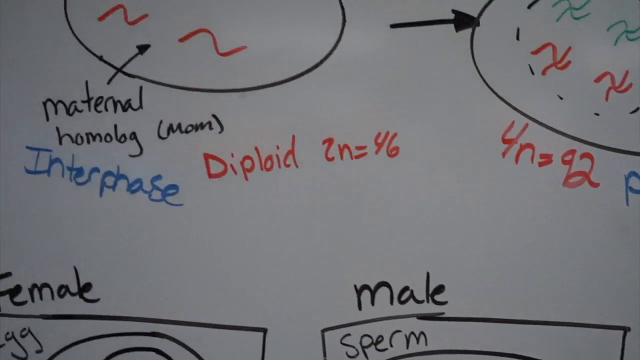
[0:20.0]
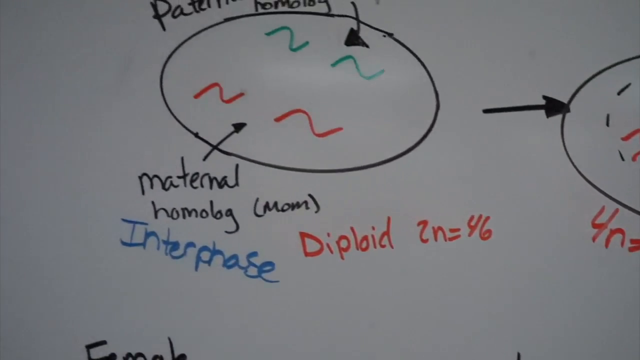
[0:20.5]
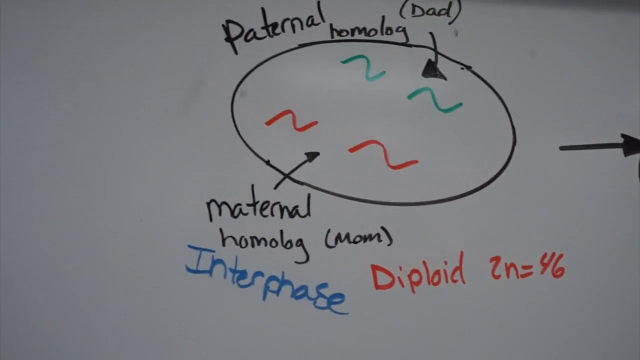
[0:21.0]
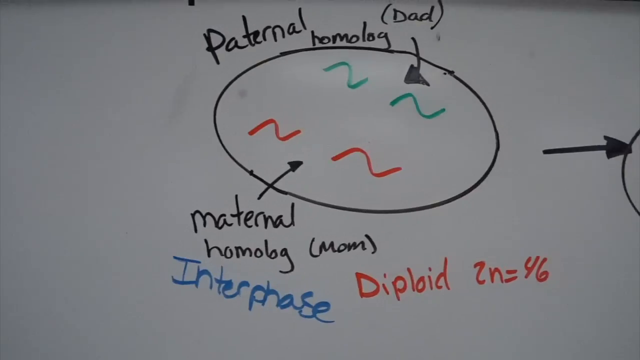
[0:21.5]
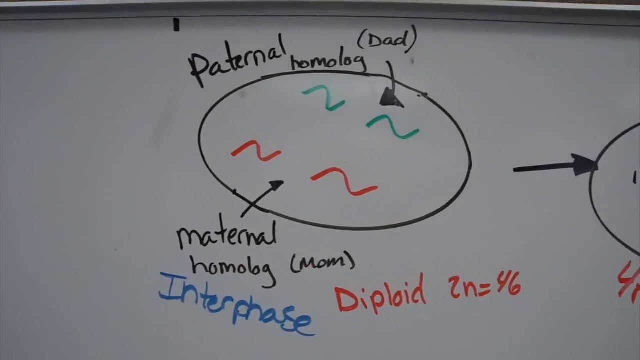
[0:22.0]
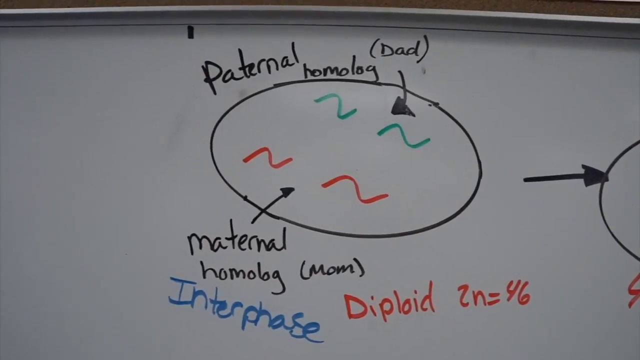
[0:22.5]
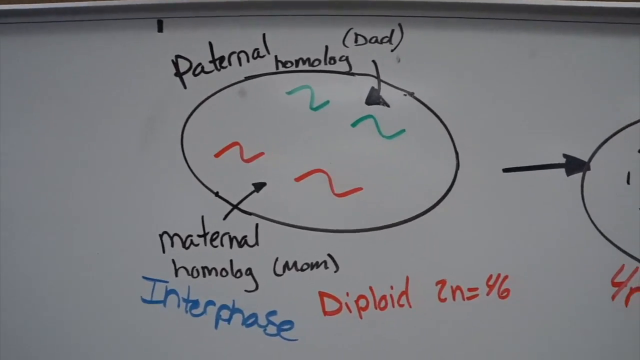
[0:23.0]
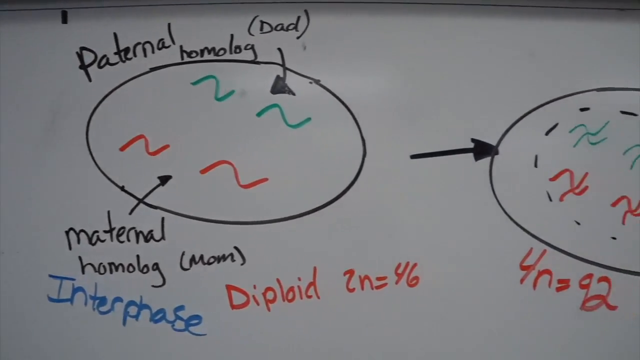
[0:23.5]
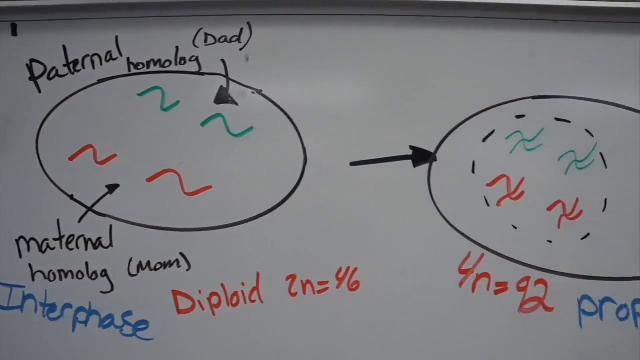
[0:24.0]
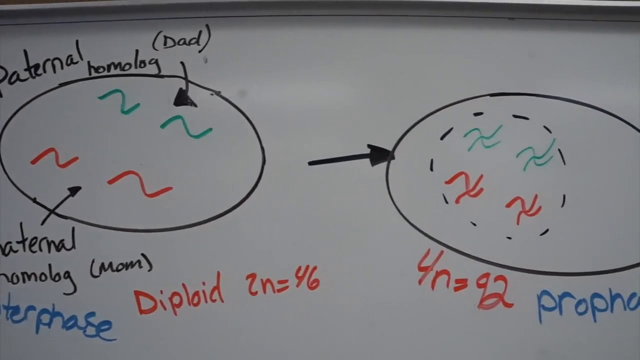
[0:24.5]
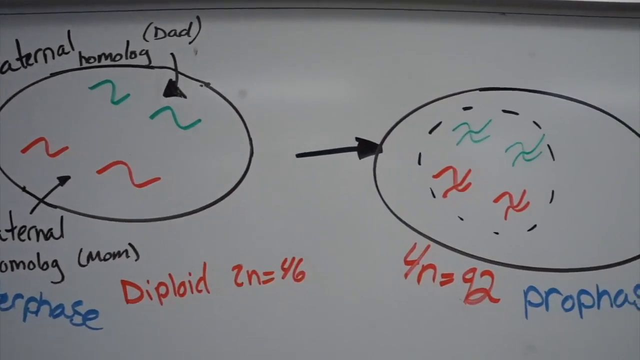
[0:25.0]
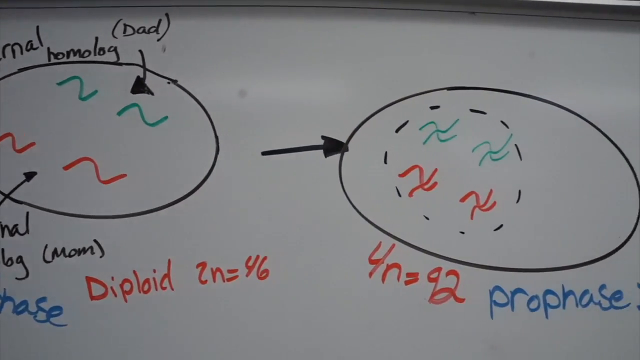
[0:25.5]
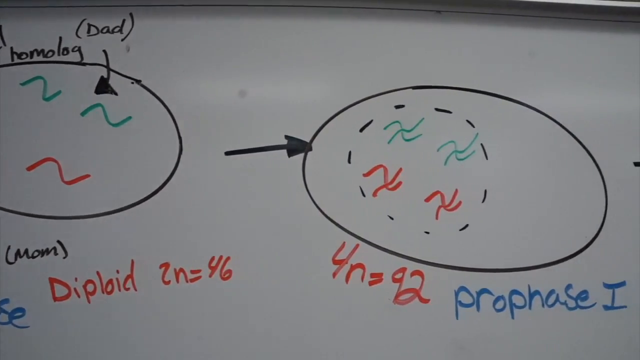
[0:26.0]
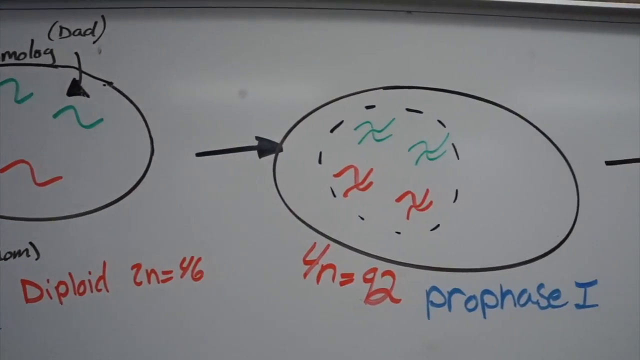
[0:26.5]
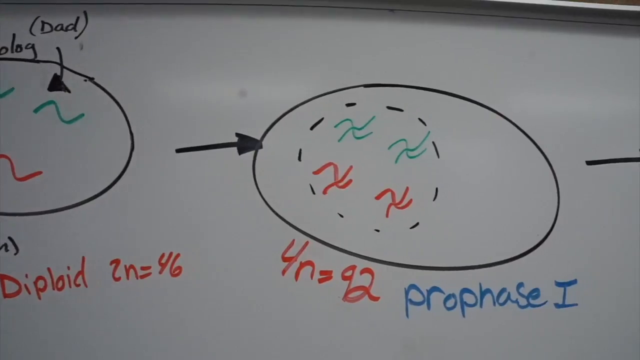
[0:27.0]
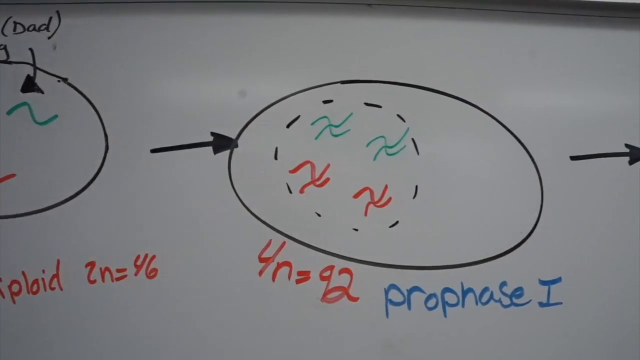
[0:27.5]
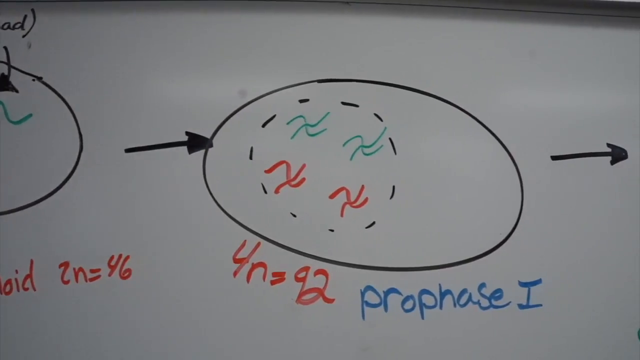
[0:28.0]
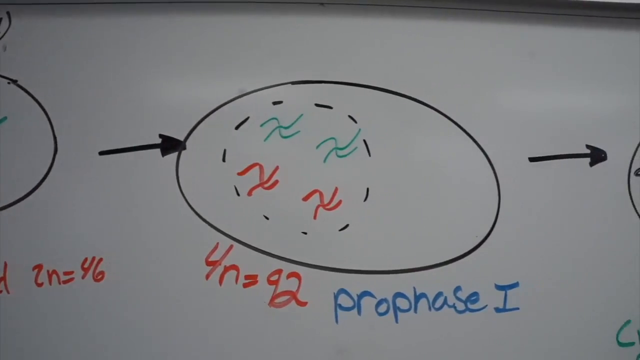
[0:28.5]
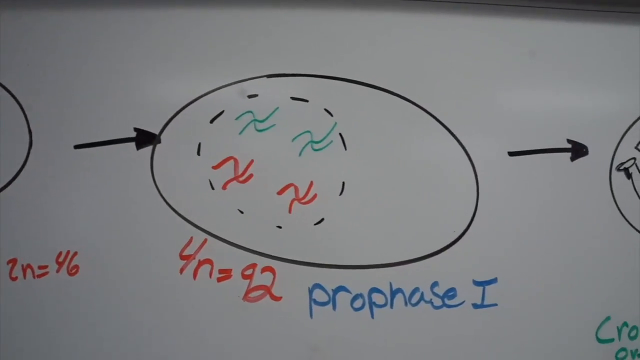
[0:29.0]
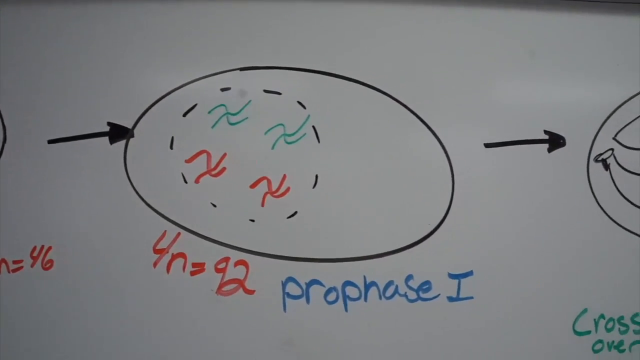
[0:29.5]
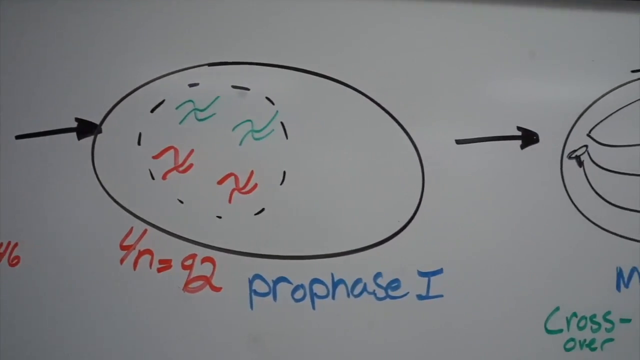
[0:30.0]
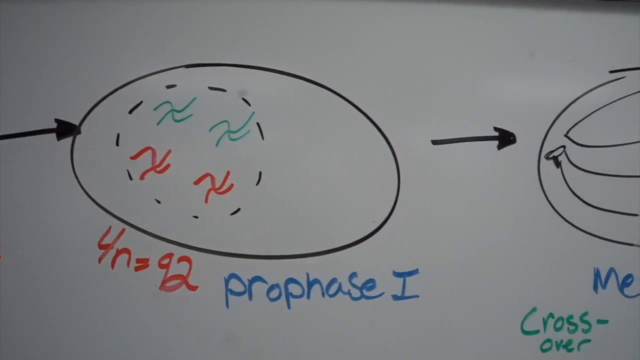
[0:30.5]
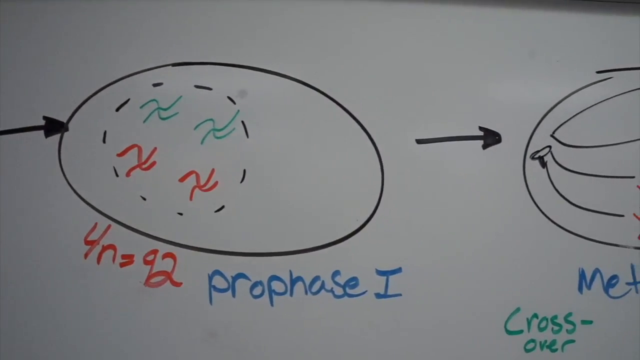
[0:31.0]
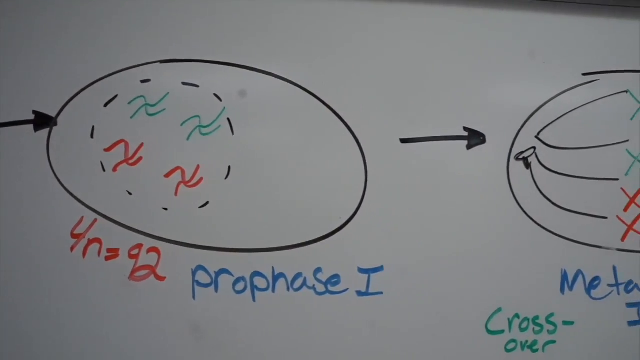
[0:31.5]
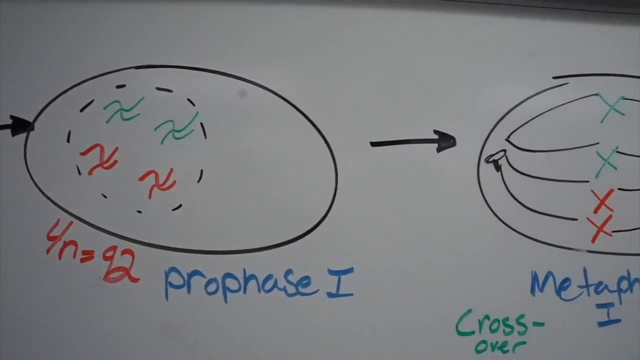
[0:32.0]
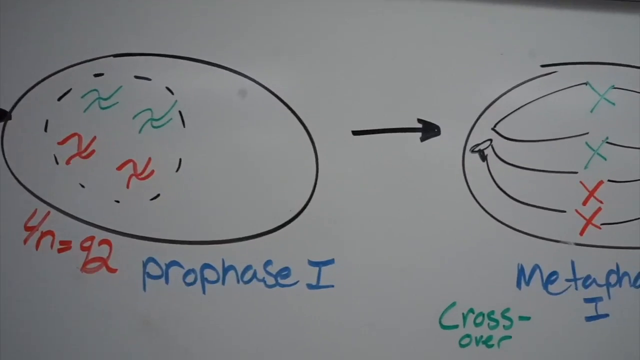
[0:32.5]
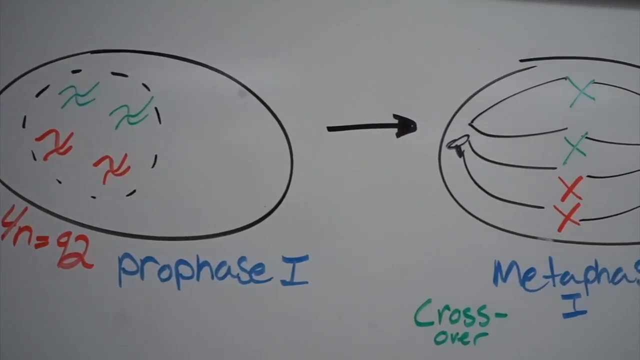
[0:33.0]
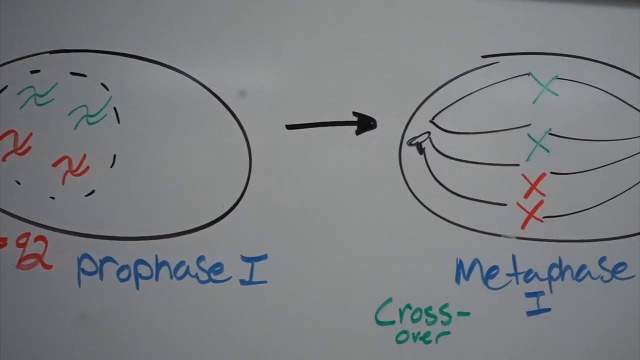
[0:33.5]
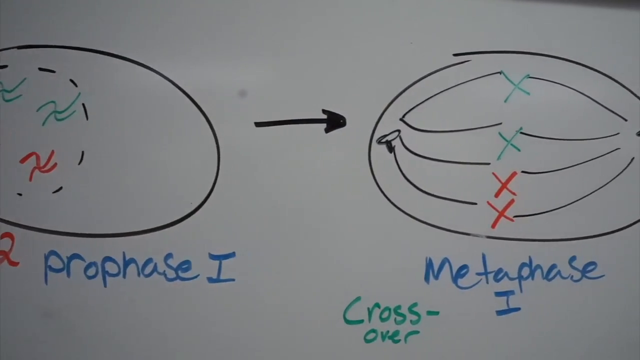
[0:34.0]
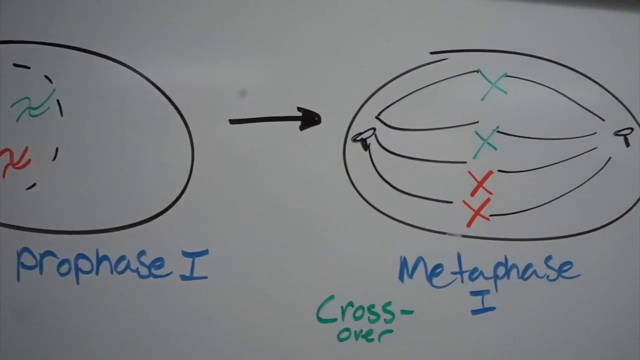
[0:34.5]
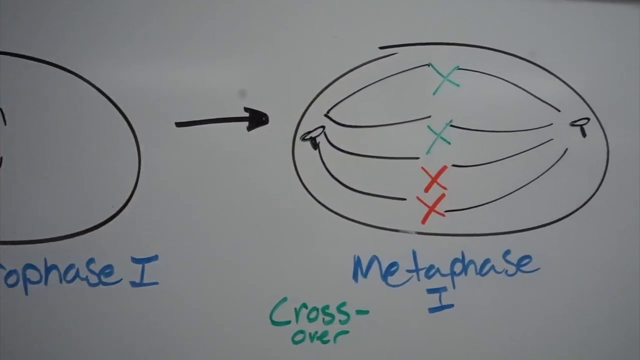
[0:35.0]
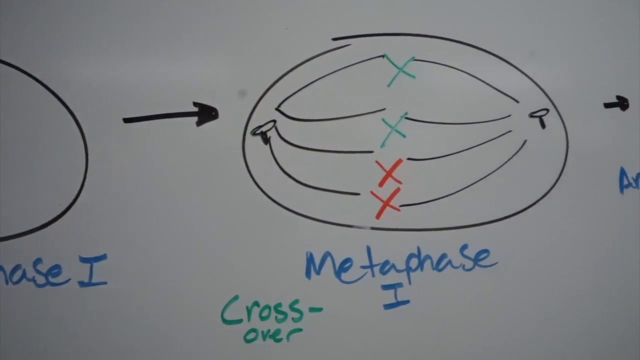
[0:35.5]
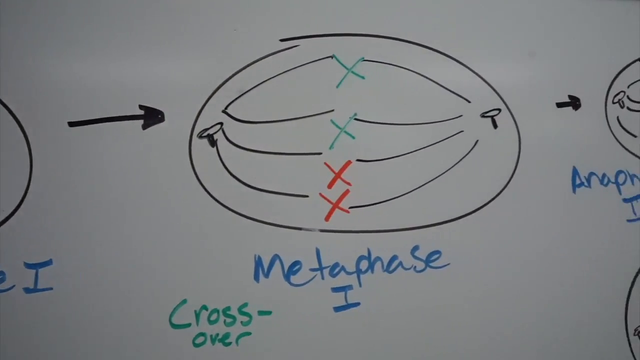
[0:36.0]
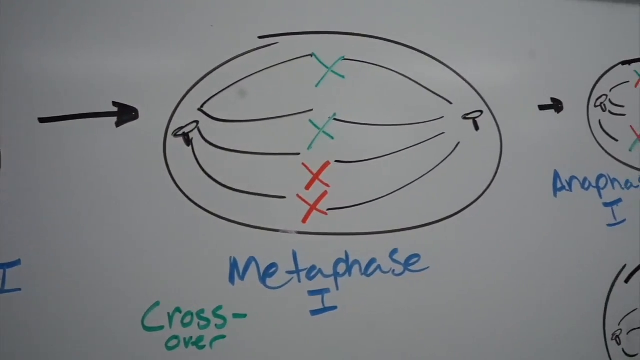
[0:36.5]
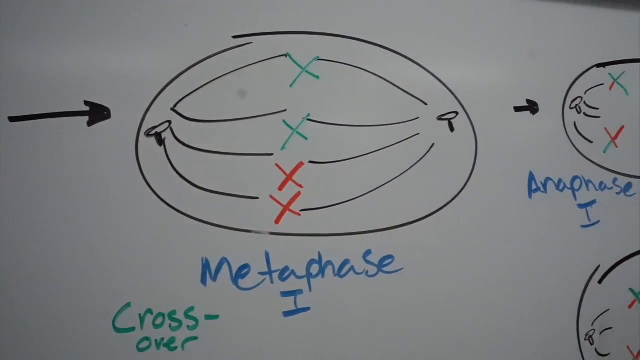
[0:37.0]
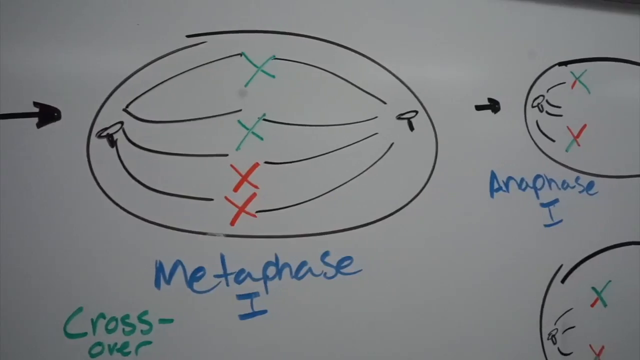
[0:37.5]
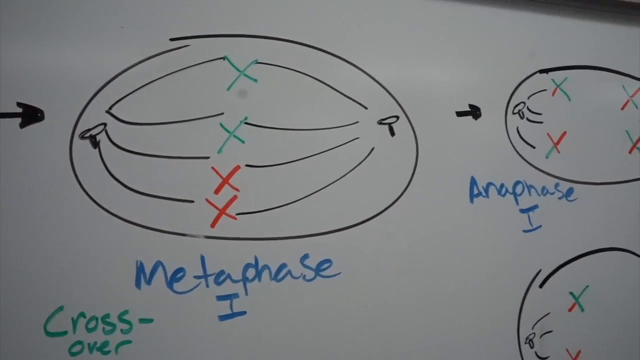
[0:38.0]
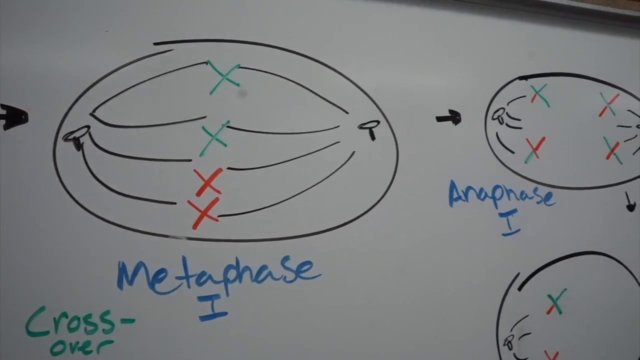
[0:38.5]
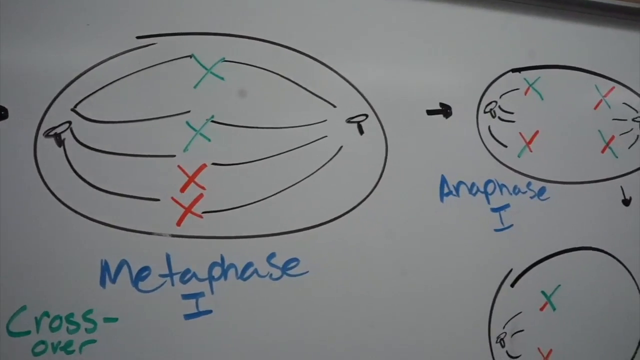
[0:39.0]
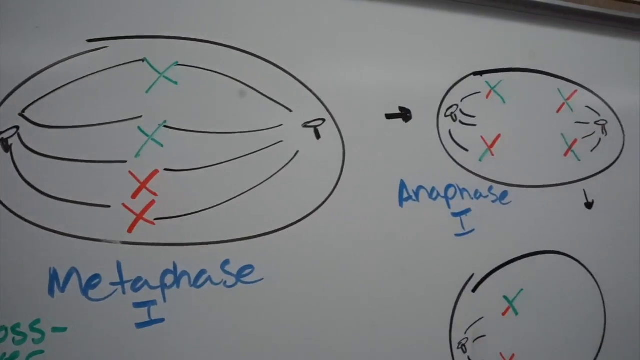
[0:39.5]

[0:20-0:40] Lots of words, drawings and arrows fill the screen. The camera zooms in on a spot labeled "maternal homologue mom" and "paternal homologue dad", showing something like Z's or squiggles inside a circle. Next, the X's are shown together, combining, with the text "4N = 92 prophase 1". An arrow points to "metaphase 1", where there are two green X's and two red X's, with lines drawn between that area. The sequence moves on to "anaphase 1", where the X's and Y's have crossed with each other. Toward the bottom is a "diploid" label equal to 46, then "4N = 92", the word "interphase", one section that says "male" and another that says "female".